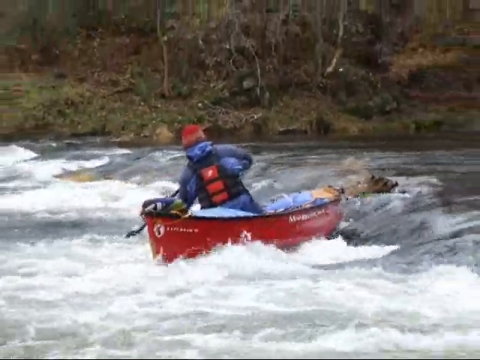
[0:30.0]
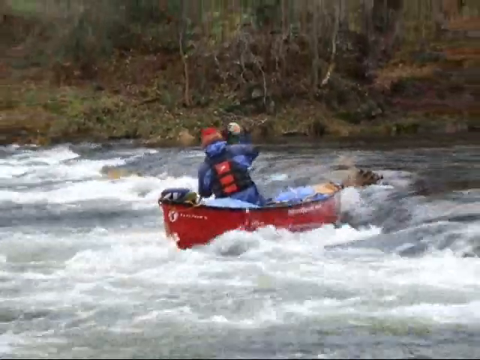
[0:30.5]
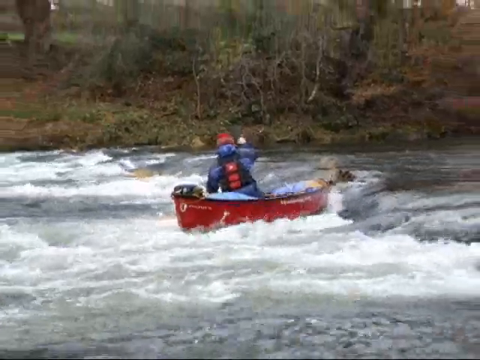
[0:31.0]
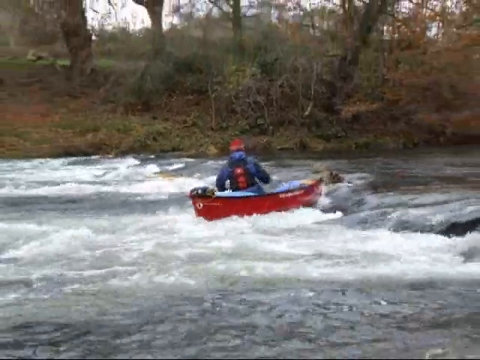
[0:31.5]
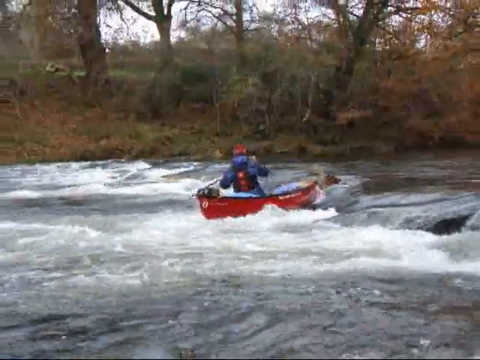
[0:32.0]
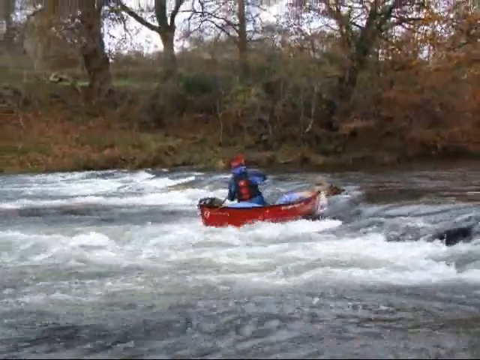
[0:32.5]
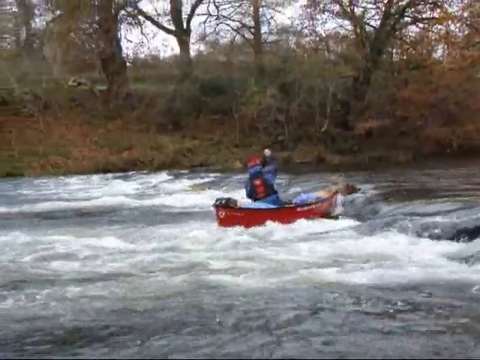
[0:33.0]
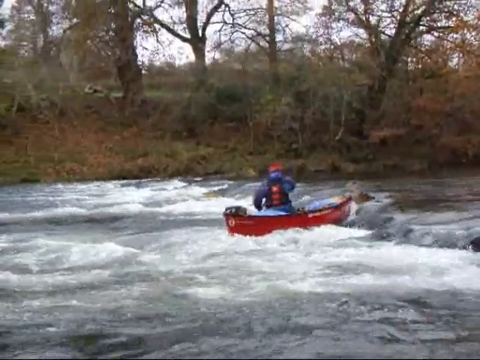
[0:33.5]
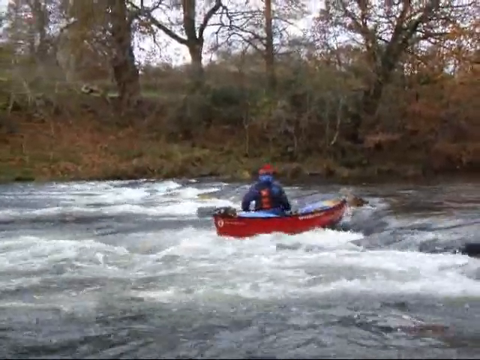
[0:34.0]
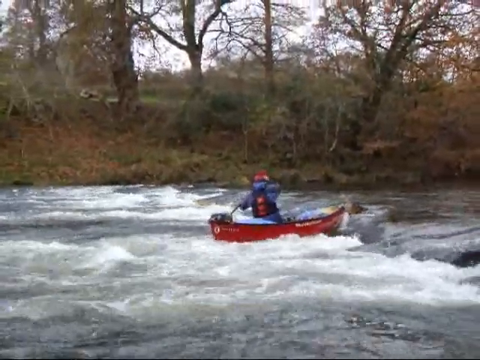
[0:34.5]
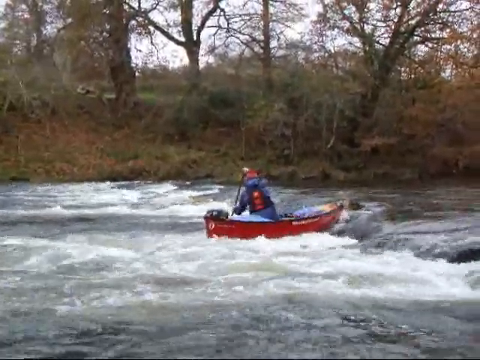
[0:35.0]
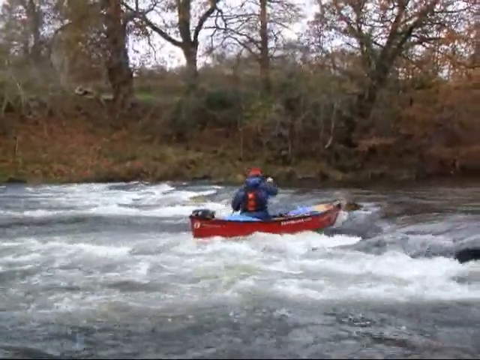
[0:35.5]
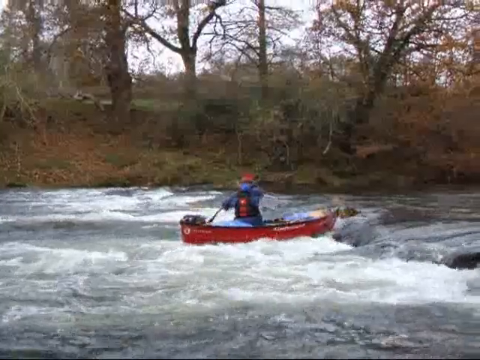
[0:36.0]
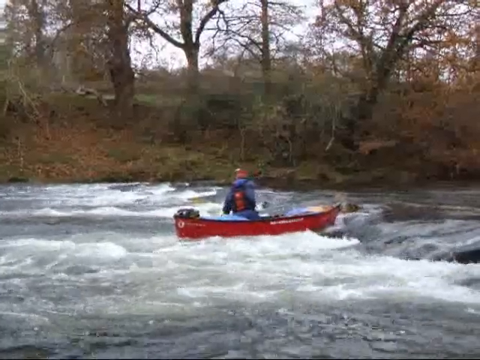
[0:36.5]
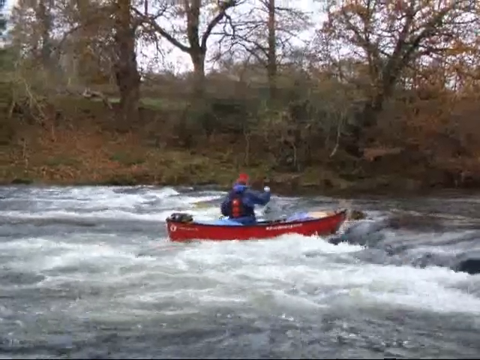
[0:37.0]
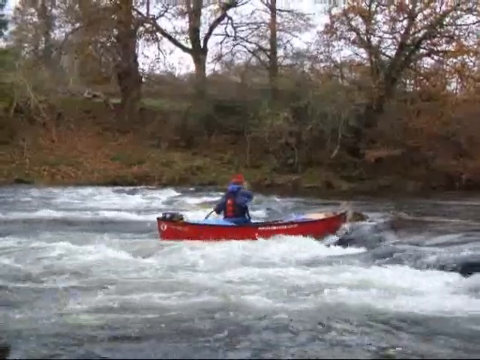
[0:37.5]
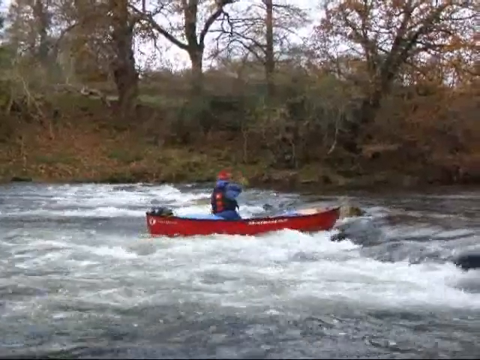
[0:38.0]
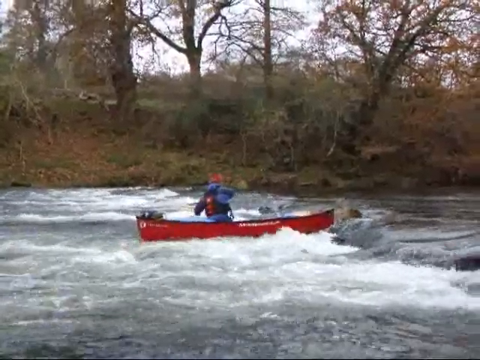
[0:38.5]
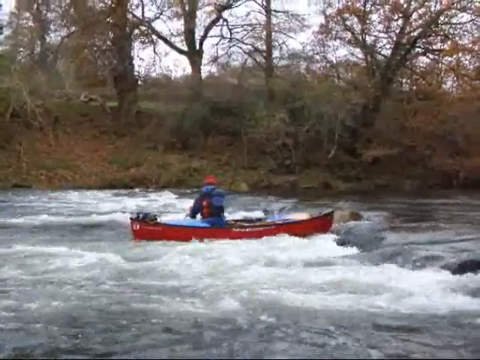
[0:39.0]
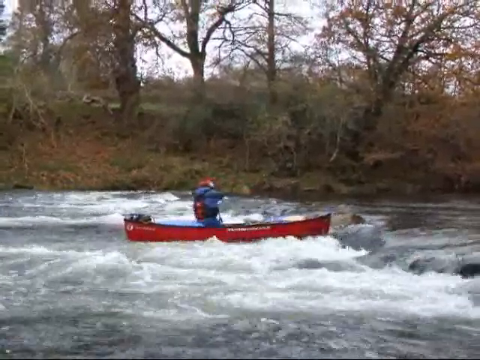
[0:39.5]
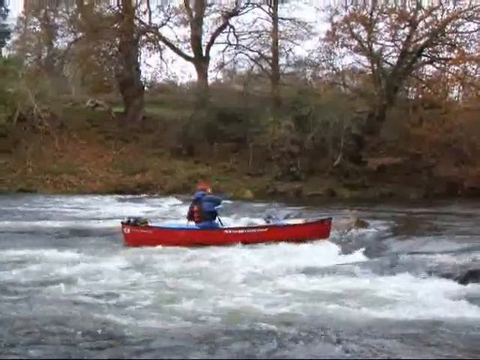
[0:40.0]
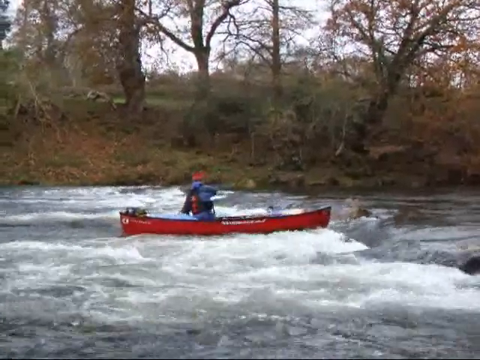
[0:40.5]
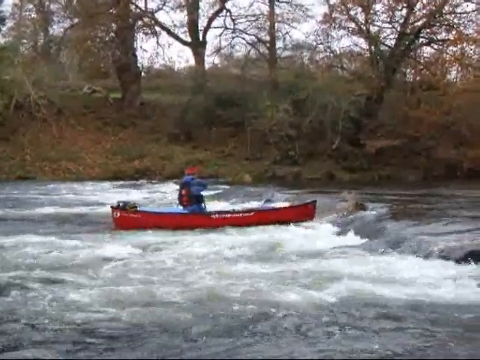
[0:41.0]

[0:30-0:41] The man paddles his canoe but stays right where he is, not going anywhere as the current rushes against him and proves stronger than he is. He keeps paddling in the same spot without moving. In front of him is a forest with a lot of green trees.